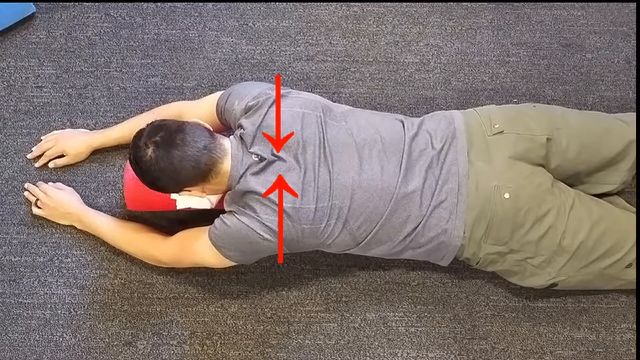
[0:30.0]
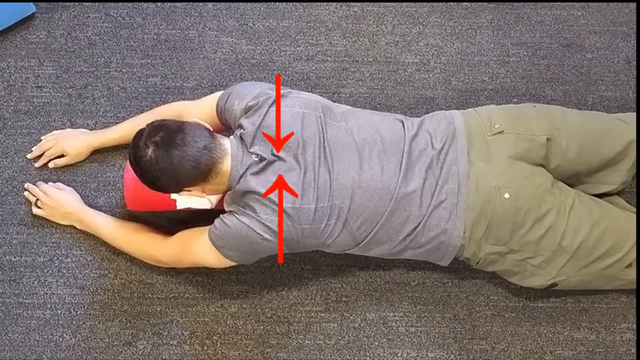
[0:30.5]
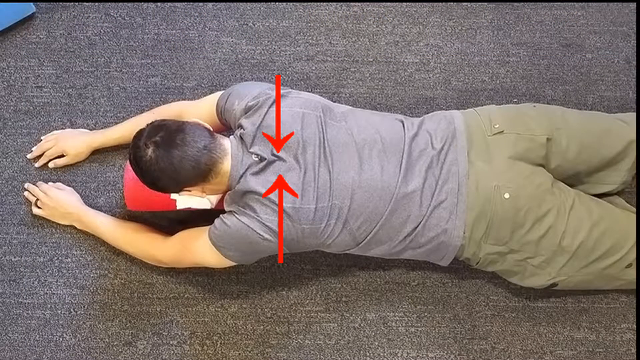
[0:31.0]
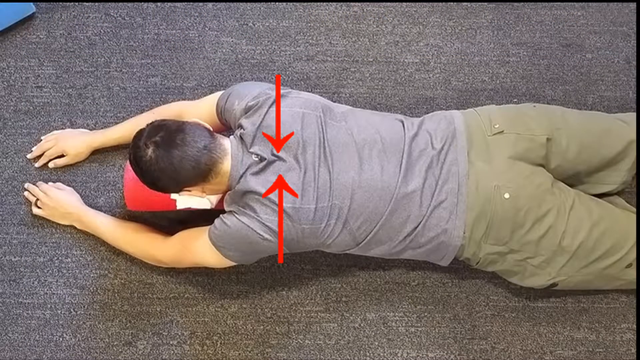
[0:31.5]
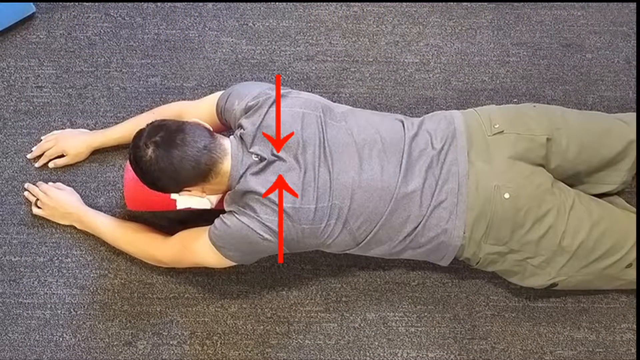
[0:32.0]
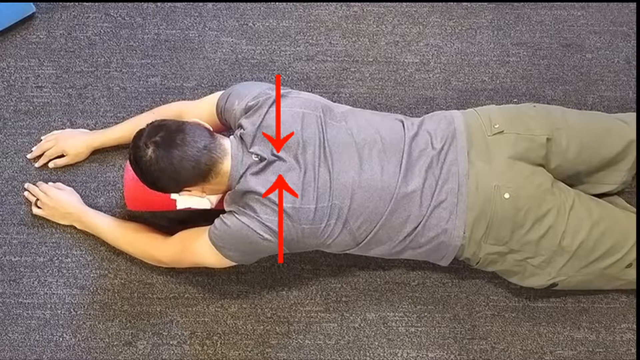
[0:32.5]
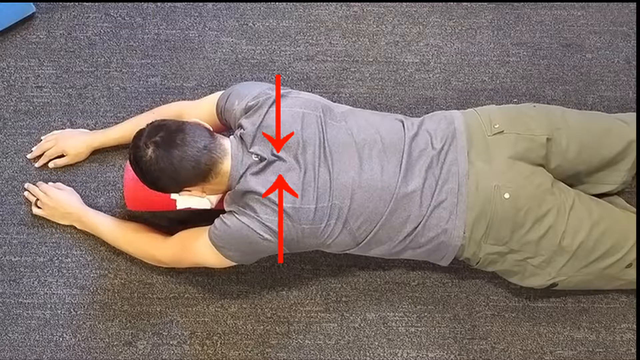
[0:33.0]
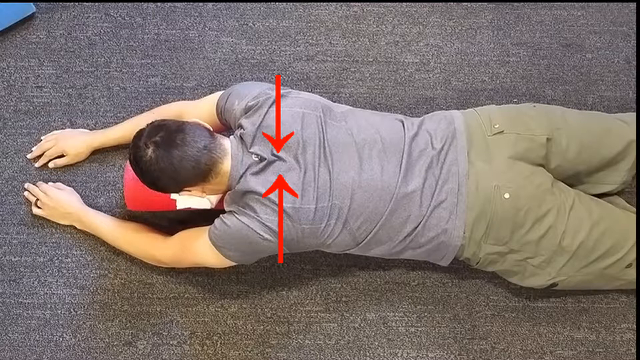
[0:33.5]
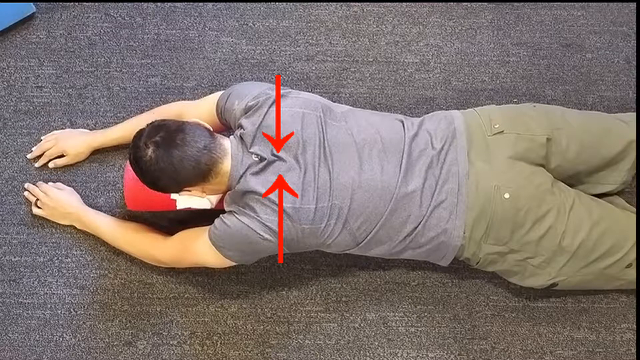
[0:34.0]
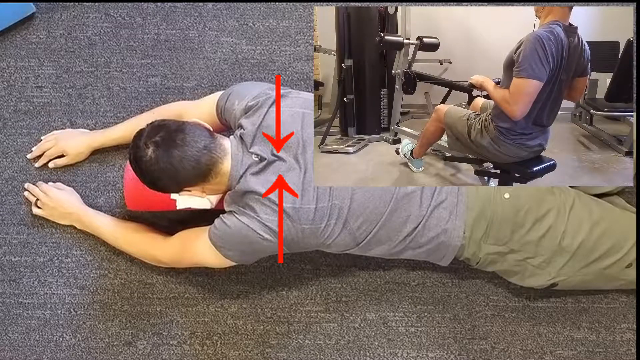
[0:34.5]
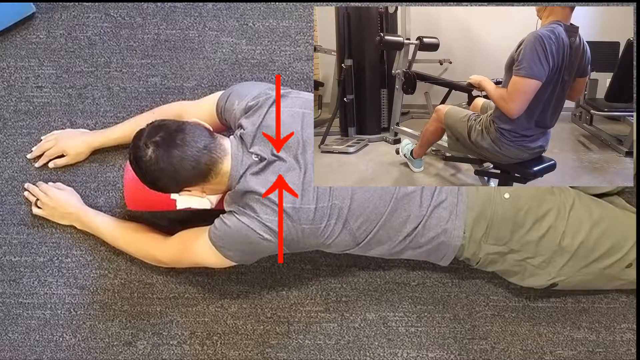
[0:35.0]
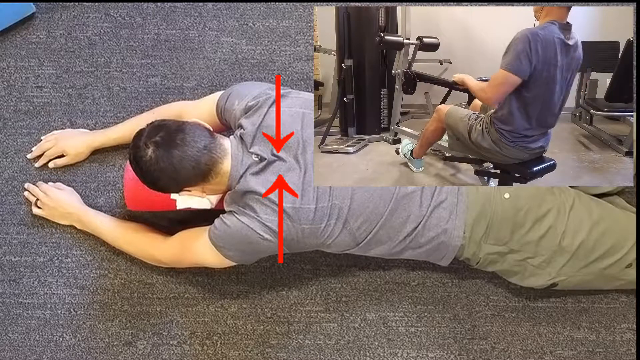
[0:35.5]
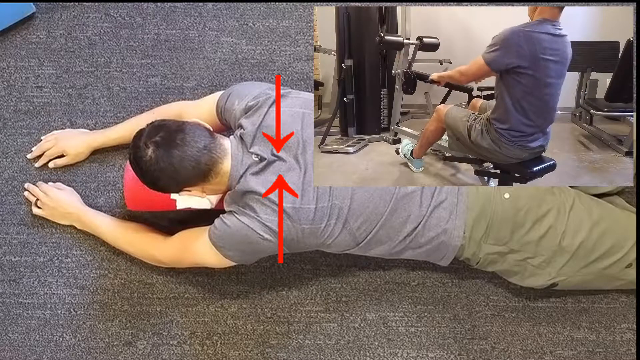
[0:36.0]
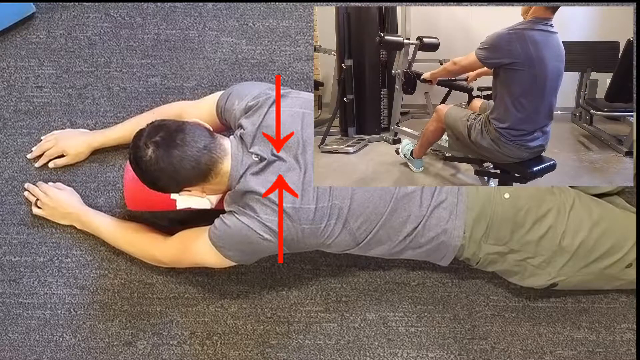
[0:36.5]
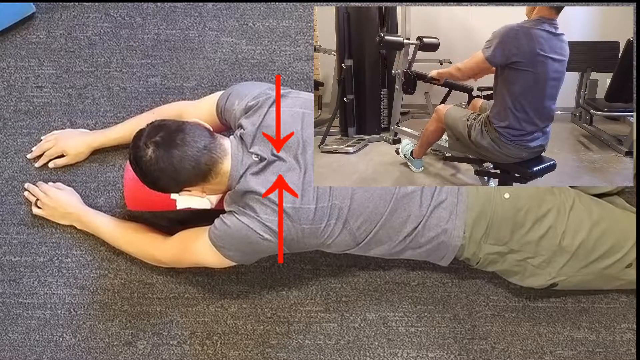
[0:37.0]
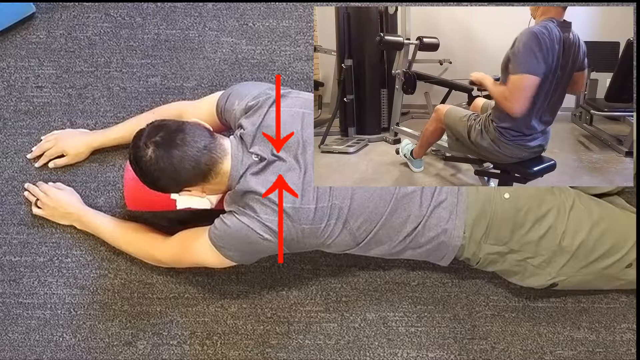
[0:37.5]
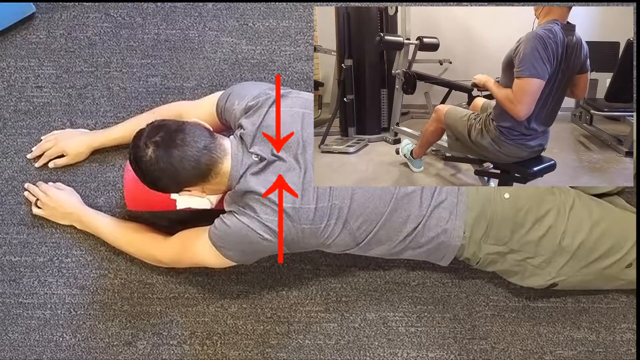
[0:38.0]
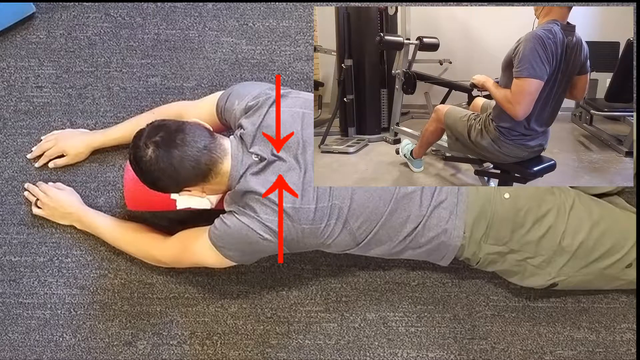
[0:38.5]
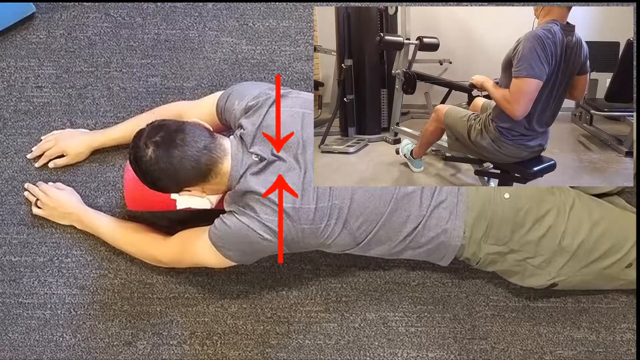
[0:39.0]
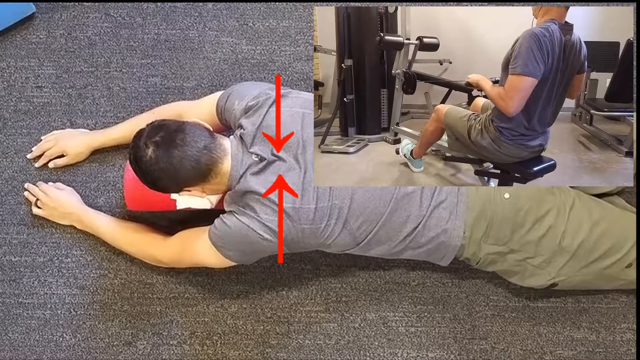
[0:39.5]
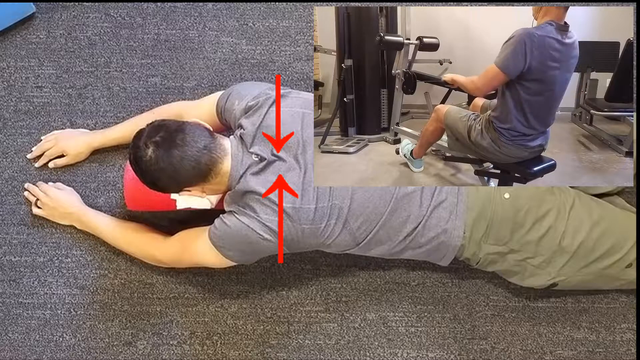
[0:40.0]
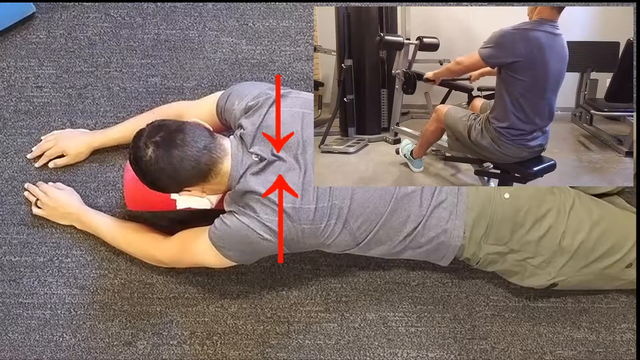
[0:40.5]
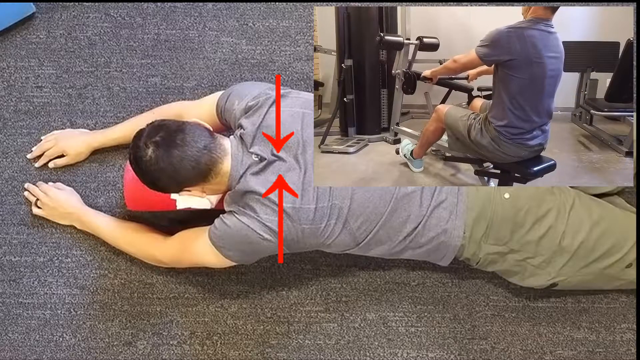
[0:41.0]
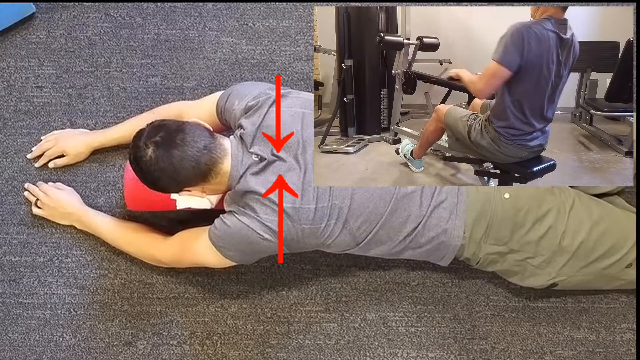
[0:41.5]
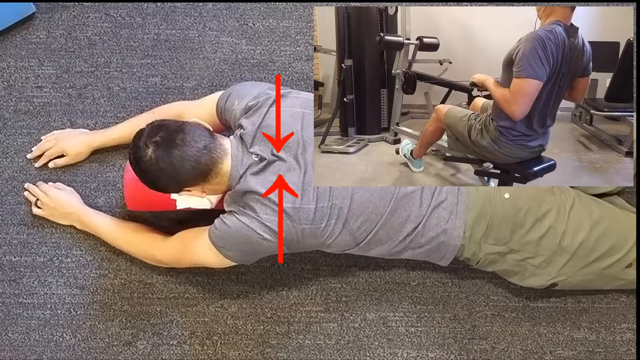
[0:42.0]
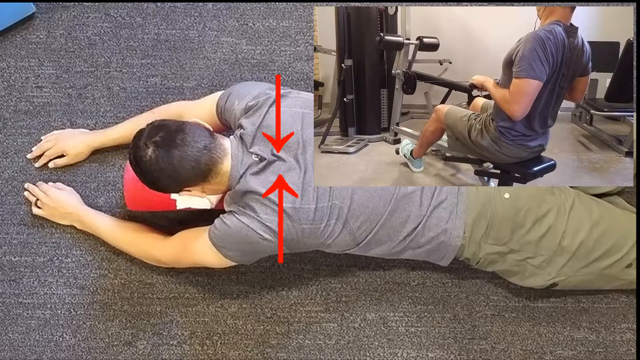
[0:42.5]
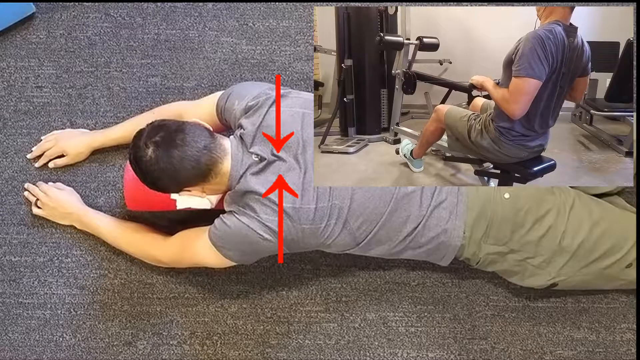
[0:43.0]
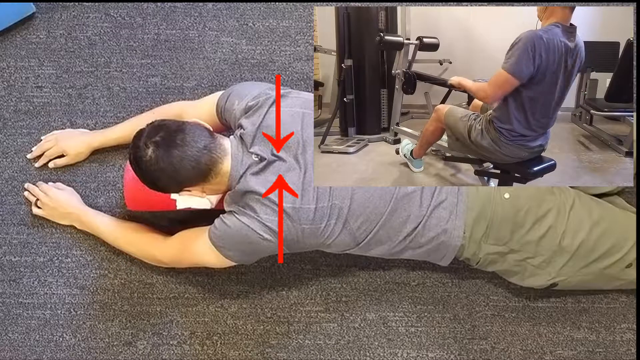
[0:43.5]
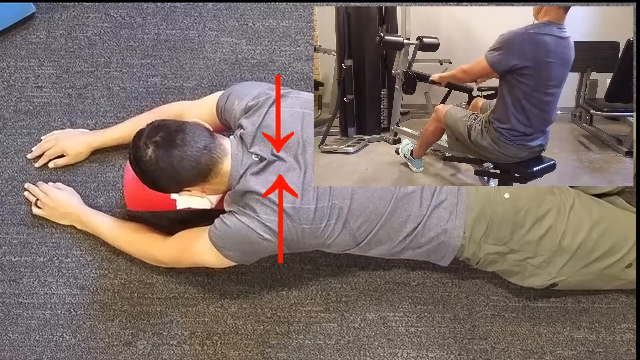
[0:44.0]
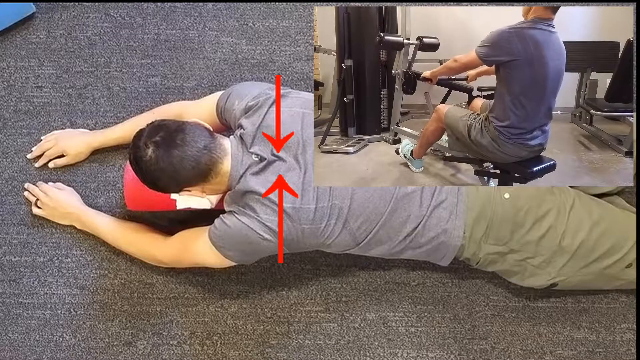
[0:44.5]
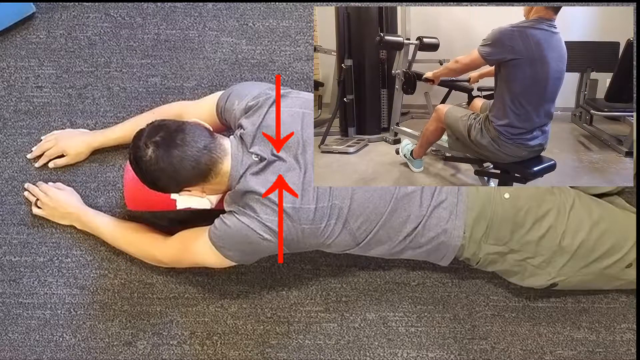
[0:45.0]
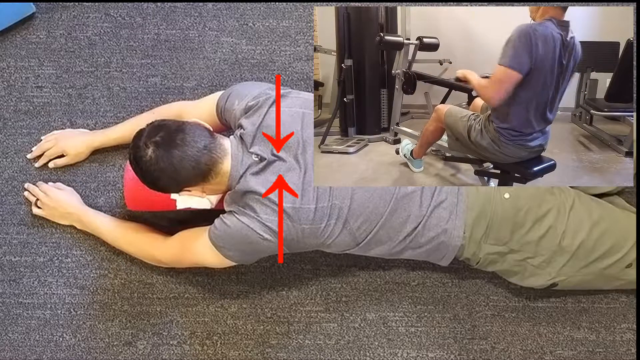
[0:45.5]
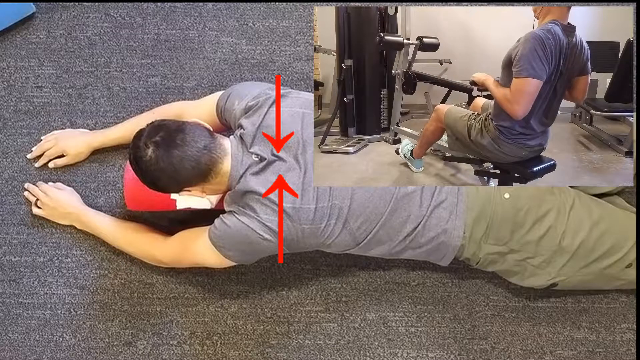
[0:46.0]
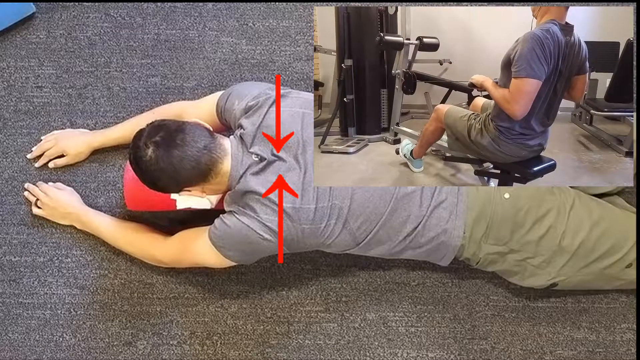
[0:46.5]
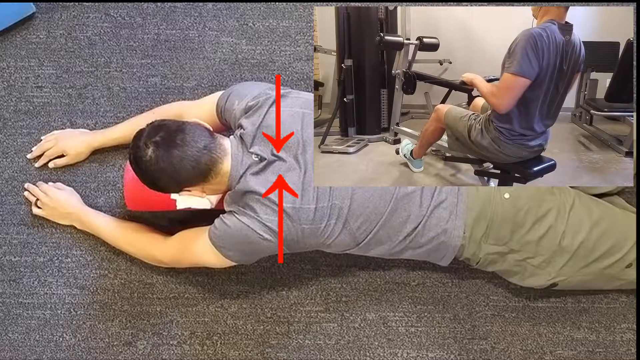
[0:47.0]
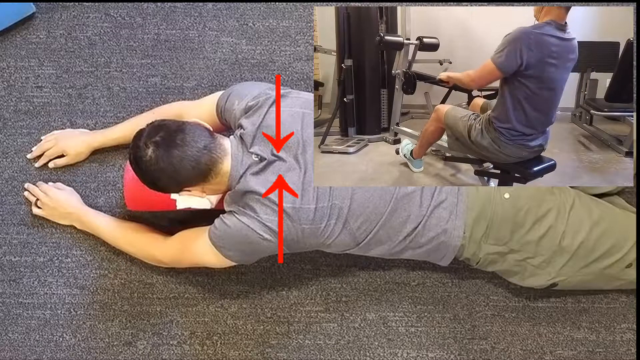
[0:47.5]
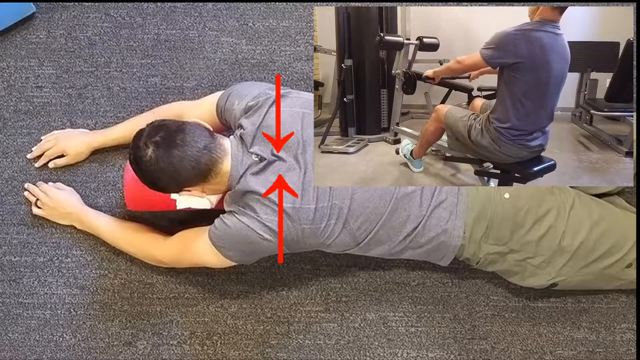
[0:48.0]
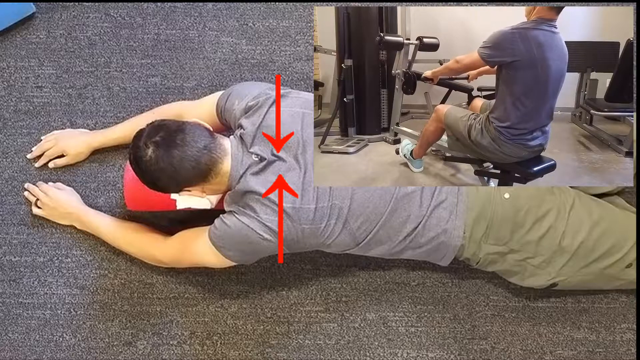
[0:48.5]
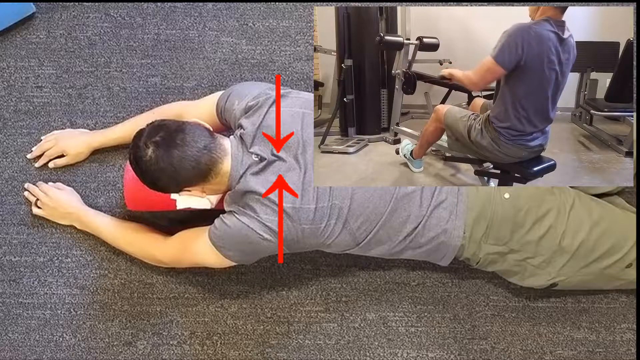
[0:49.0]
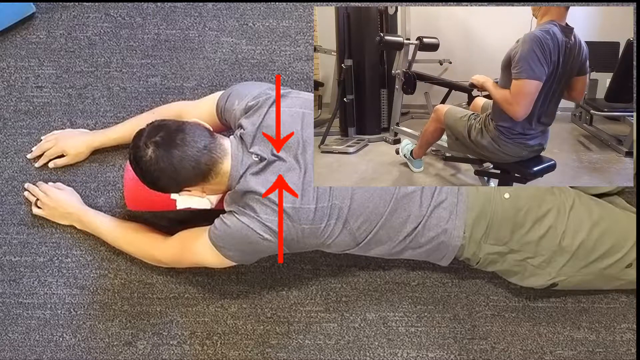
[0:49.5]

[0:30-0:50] The person is still lying on the ground, and a video appears in the upper right area showing someone sitting and doing a row exercise. They hold a handle attached to a rope and pull it toward their body, back slanted away, seated at what looks like a small bench. A machine to the left goes up and down as they complete the exercise. The person wears a faded light blue shirt and beige shorts. They keep pulling the handle toward their body and letting it extend away; as the handle comes toward the body the machine goes up, and as it moves away the machine goes down.